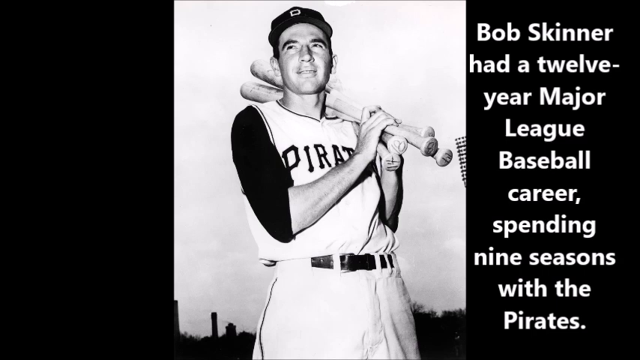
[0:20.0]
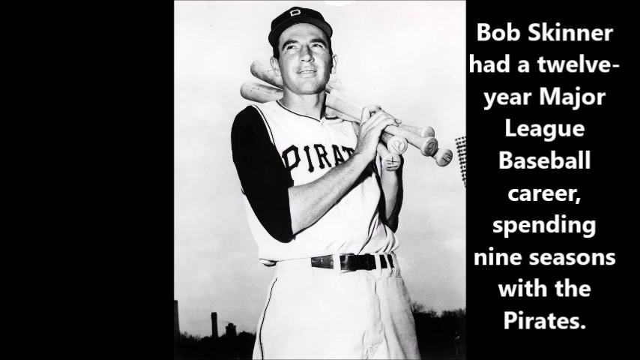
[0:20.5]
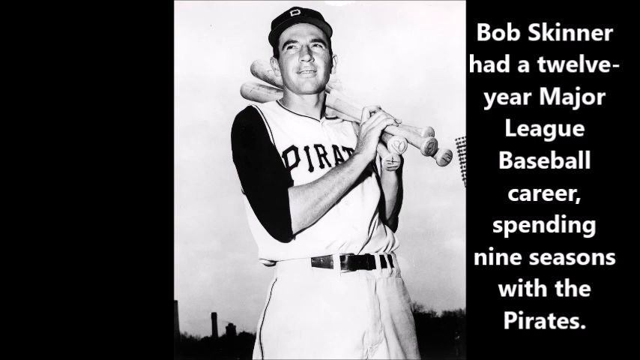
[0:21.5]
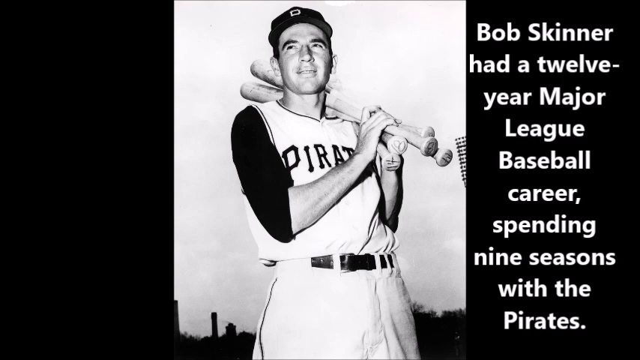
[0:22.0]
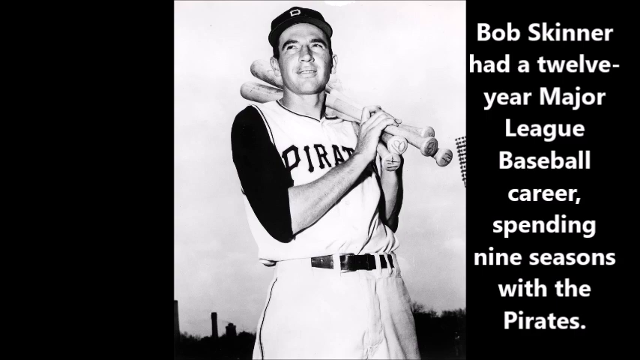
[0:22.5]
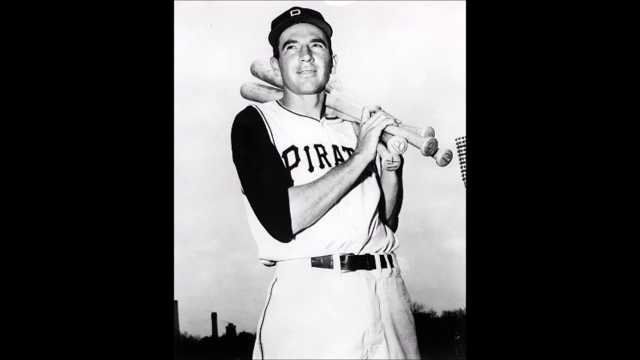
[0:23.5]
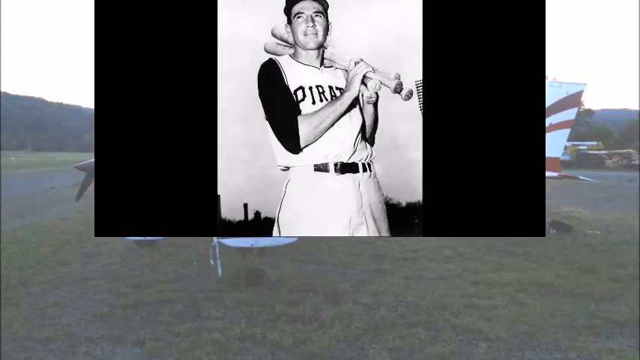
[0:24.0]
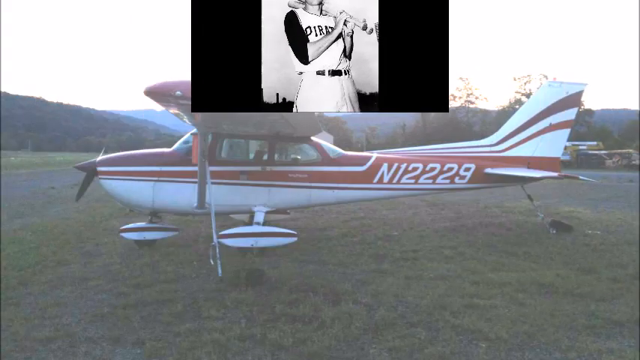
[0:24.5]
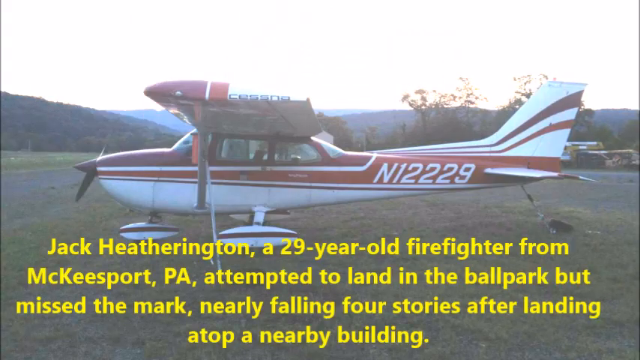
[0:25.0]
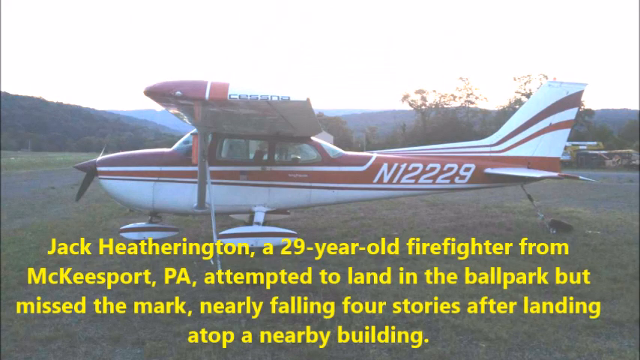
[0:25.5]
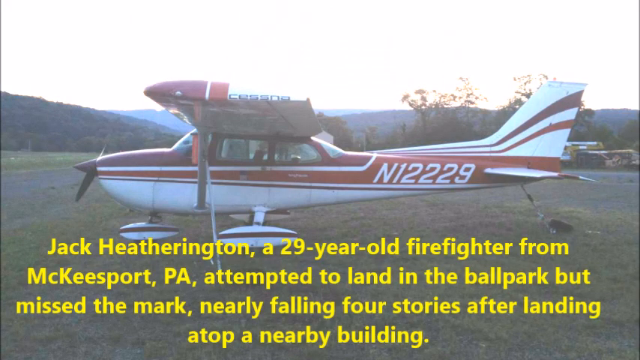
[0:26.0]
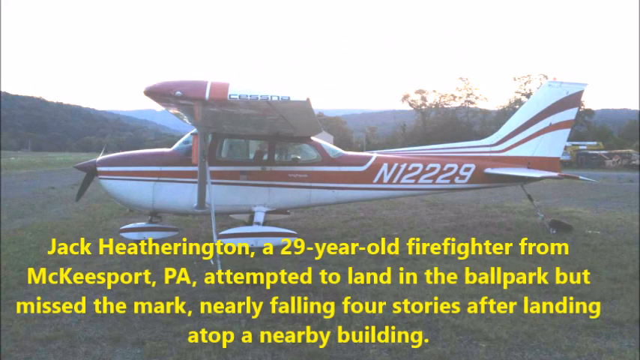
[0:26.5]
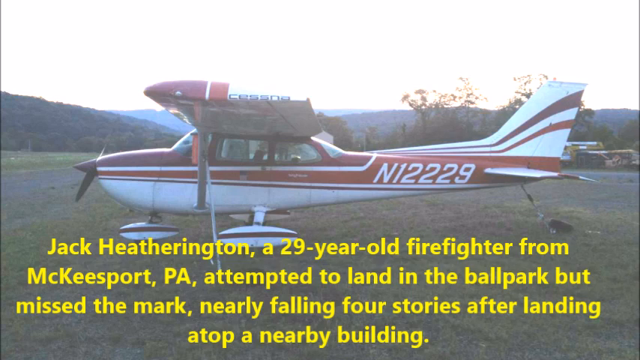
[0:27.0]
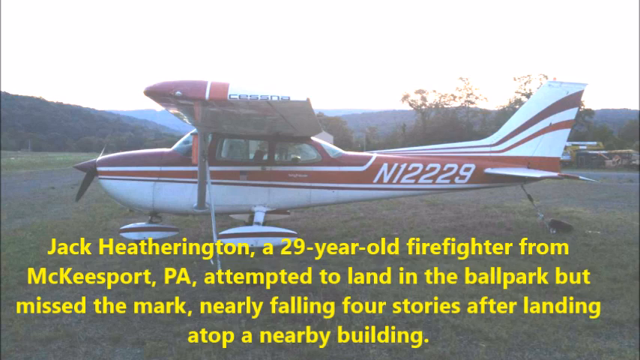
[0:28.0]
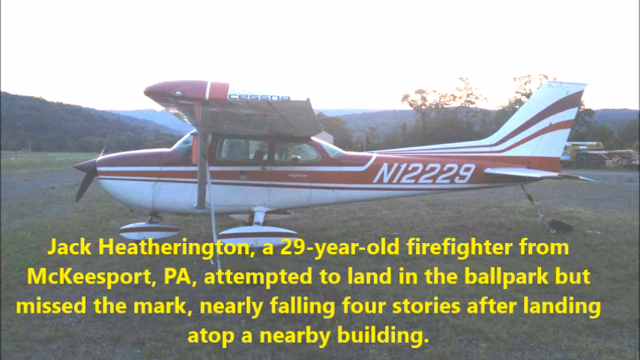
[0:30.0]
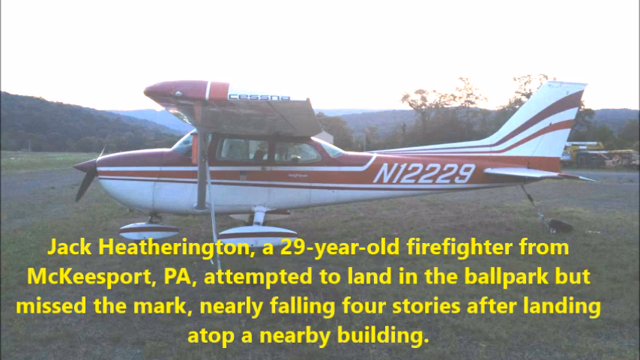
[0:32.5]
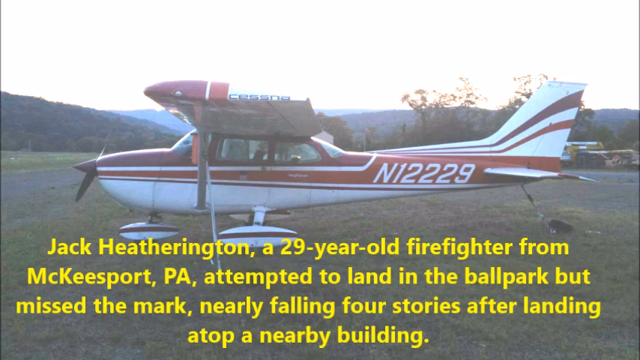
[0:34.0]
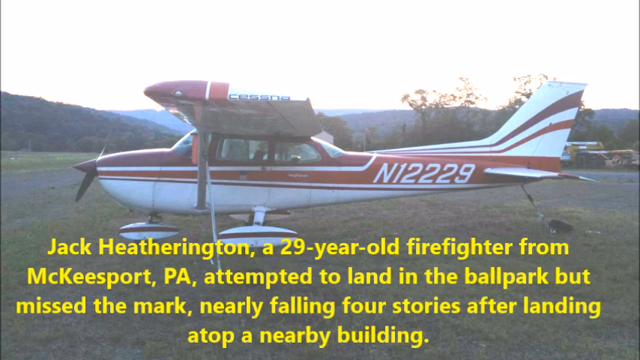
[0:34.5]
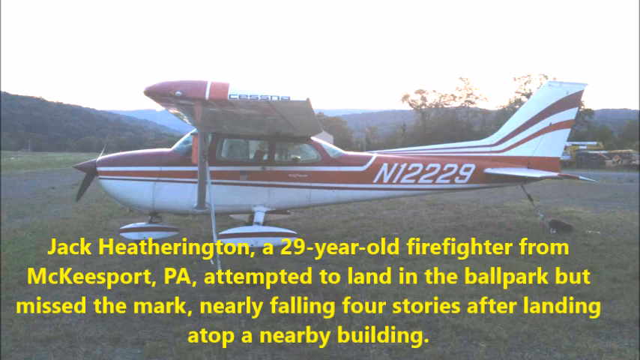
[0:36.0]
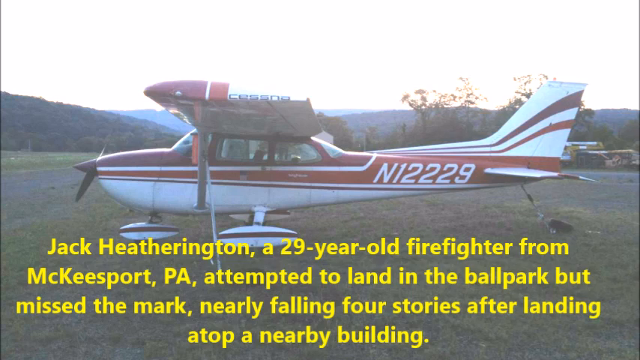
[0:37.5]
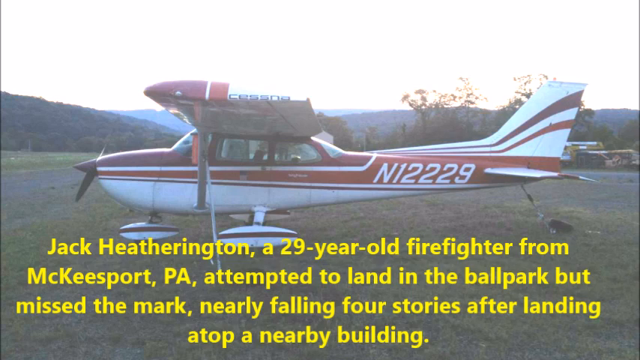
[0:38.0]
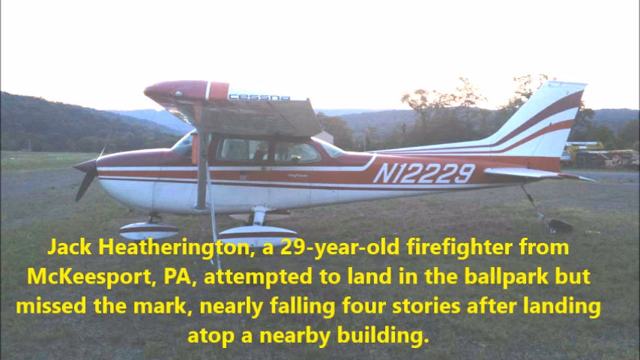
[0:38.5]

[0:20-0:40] The shot of the baseball player photograph remains in the centre of the screen for several seconds. Then the text on the black section on the right disappears, and the entire screen gradually reduces in size up into the middle of the screen and off out the top of the shot. In its place is a still photograph of a single-propeller light aircraft on the ground, facing the left of the shot. It is tethered to the grass underneath and appears to be on a hilly area with views of valleys in the background. The aircraft is predominantly white with purple and orange stripes along its length and up its tail. A white number near the tail on the body of the aircraft reads N12229. Yellow writing appears at the bottom of the image: 'Jack Hetherington, a 29-year-old firefighter from McKeesport, PA, attempted to land in the ballpark but missed the mark, nearly falling four storeys after landing atop a nearby building.'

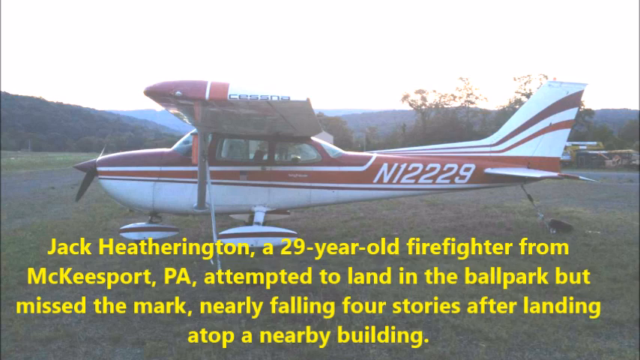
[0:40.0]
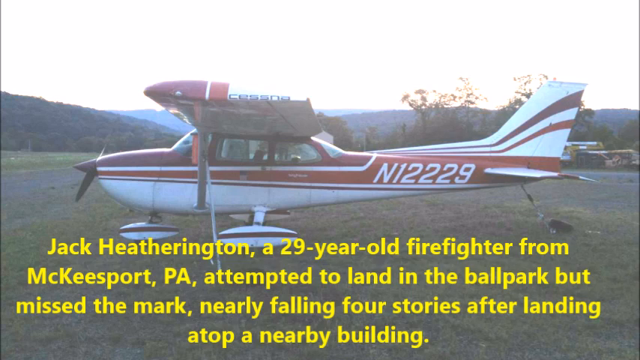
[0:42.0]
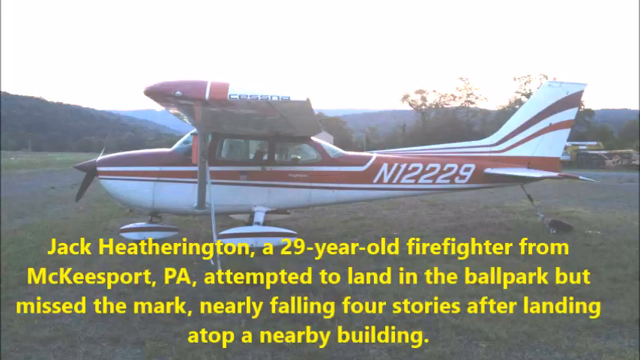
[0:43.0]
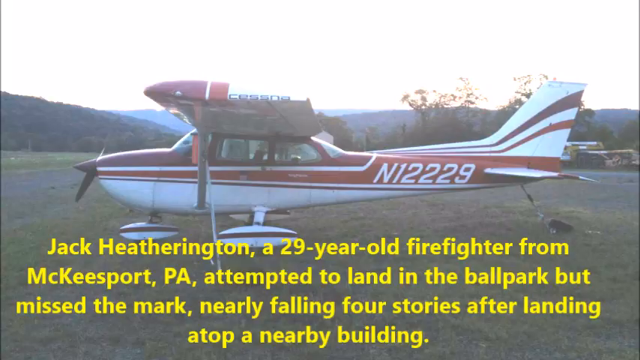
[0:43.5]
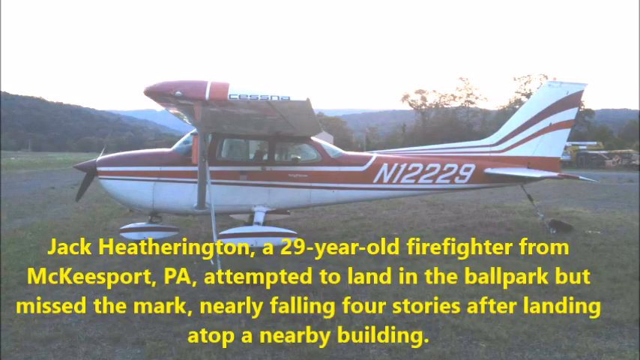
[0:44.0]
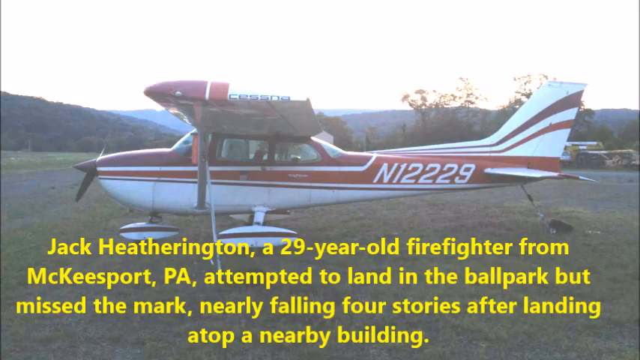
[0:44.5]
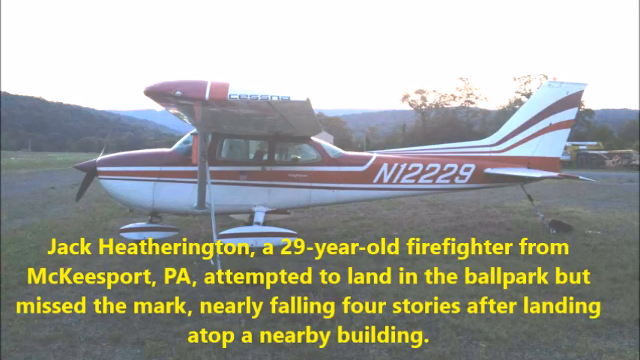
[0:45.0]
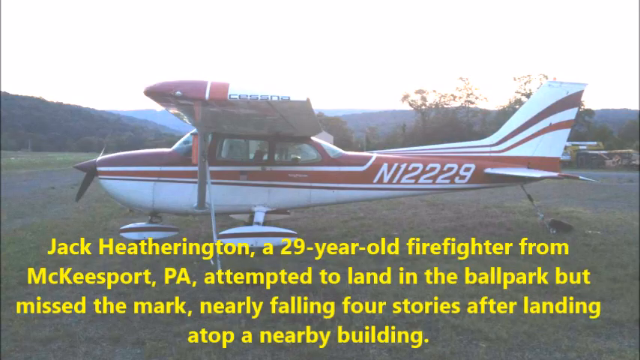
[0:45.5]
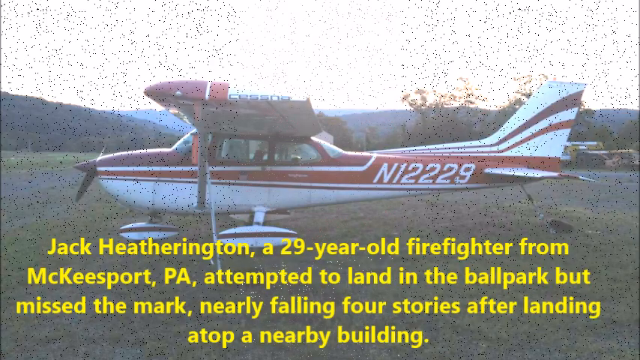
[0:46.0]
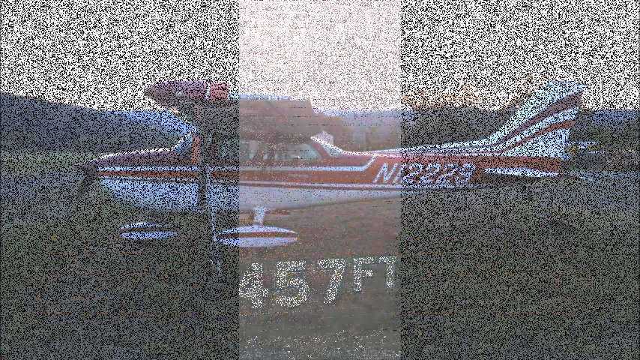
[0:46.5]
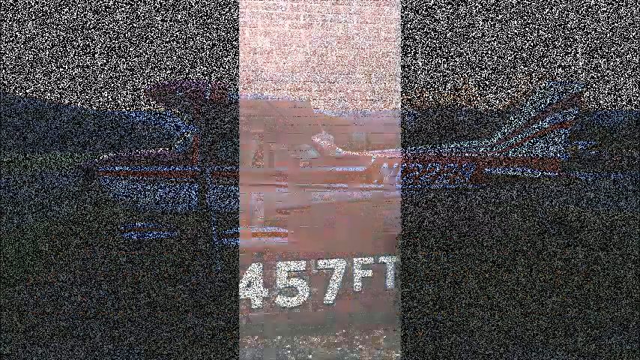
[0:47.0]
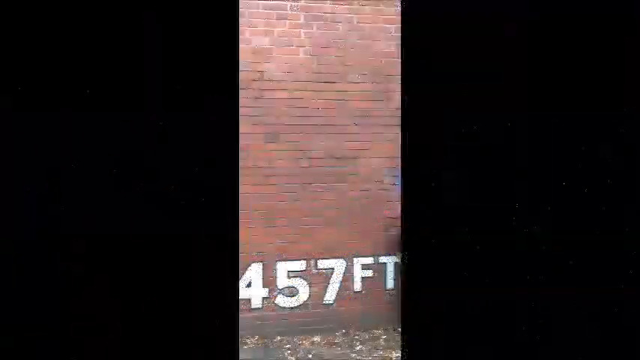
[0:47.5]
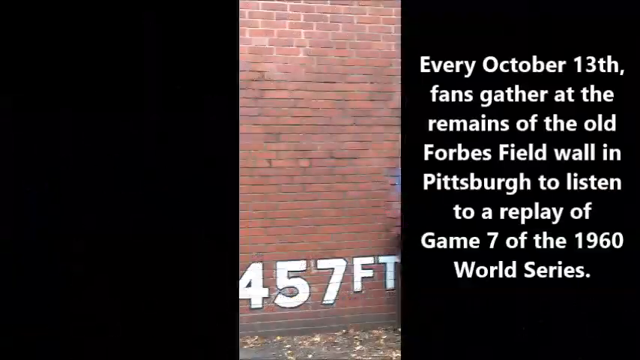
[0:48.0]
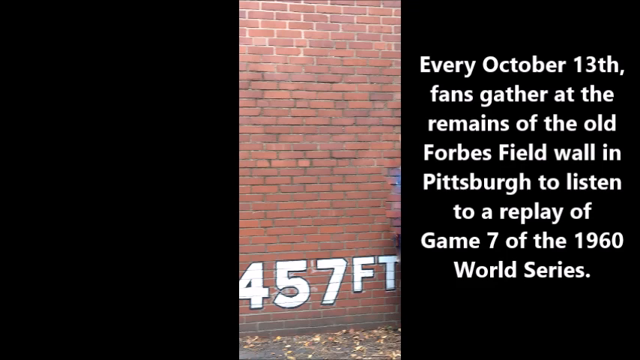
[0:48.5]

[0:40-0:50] The still image of the light aircraft and the yellow text remain for some time before a digital effect that appears to introduce static to the screen changes it to a different image. Now there are black sections on the left and right, with a narrow vertical strip in the centre of the screen showing a photograph of a red brick wall with white writing at its base that reads 457FT. White text appears on the right-hand black section: 'Every October 13th, fans gather at the remains of the old Forbes Field wall in Pittsburgh to listen to a replay of Game 7 of the 1960 World Series'. Amber leaves lie on the ground at the base of the wall, possibly suggesting it is autumn.